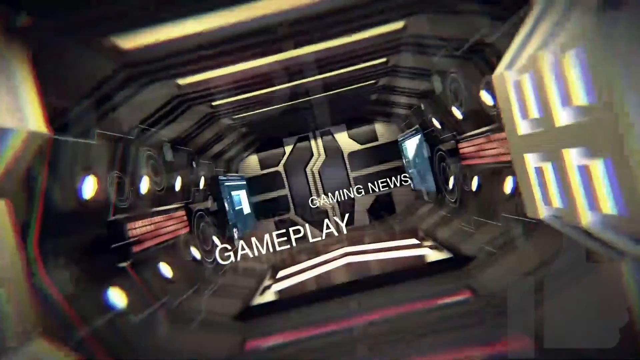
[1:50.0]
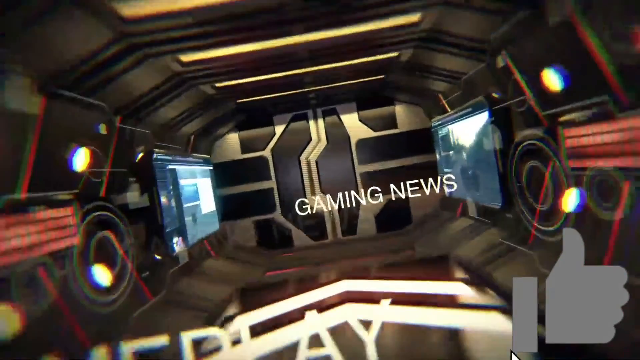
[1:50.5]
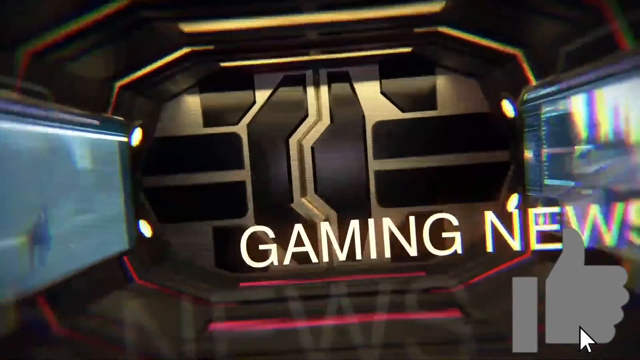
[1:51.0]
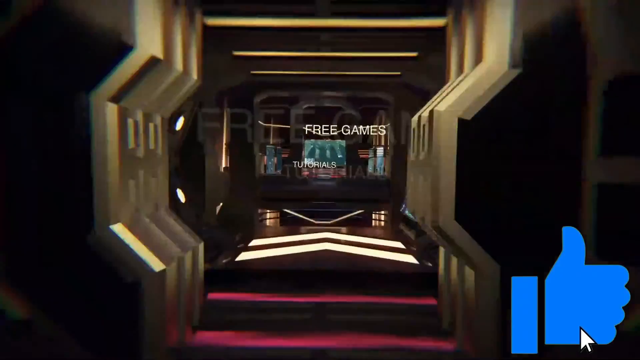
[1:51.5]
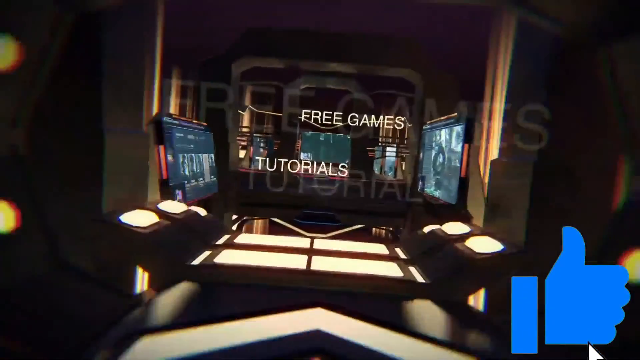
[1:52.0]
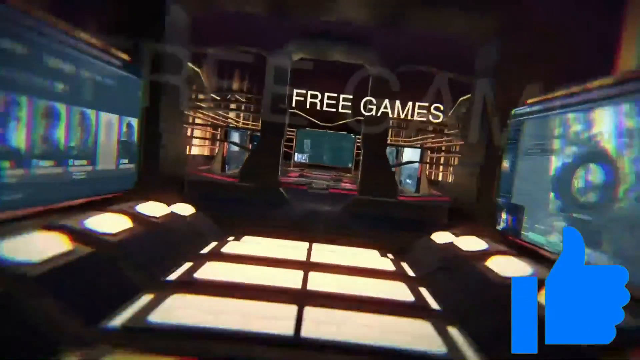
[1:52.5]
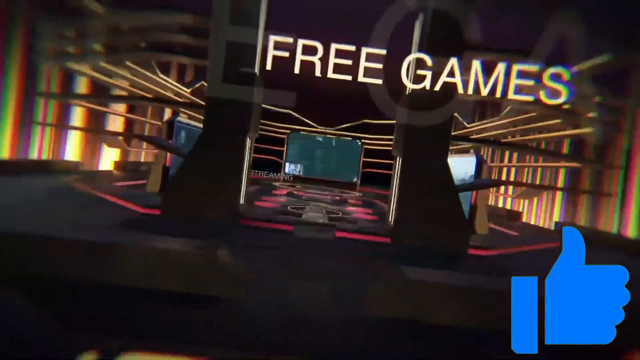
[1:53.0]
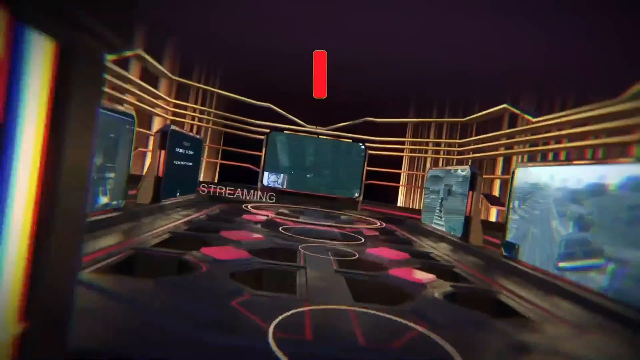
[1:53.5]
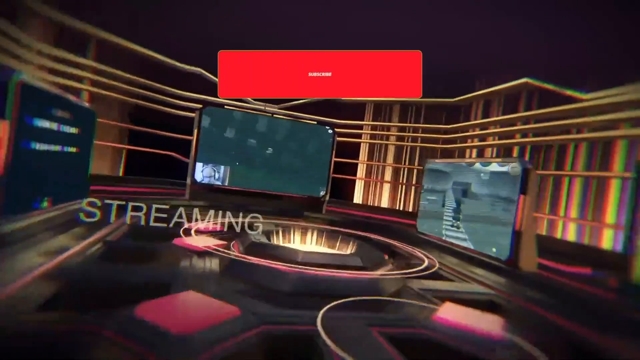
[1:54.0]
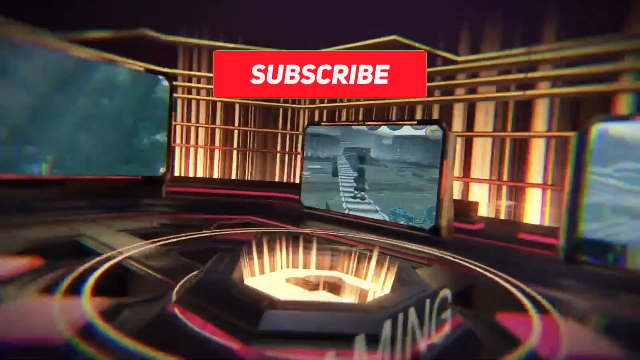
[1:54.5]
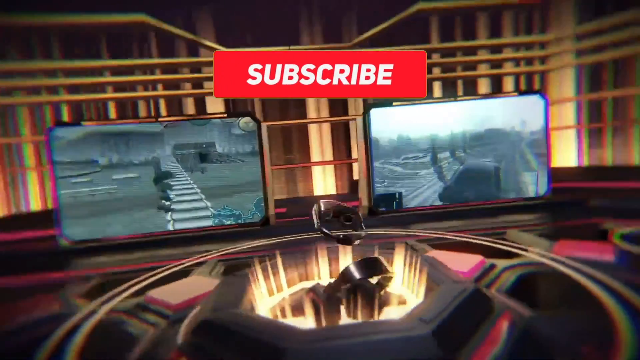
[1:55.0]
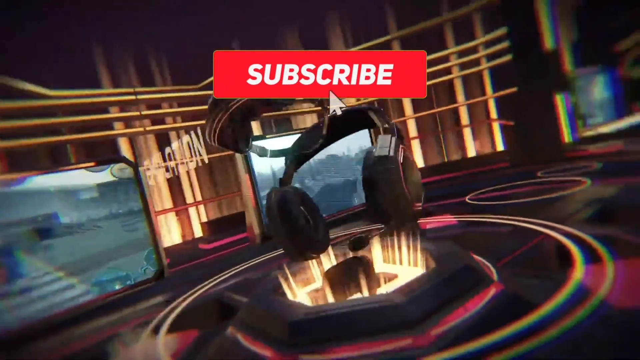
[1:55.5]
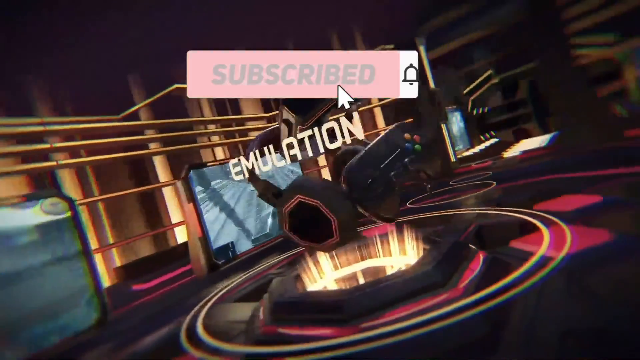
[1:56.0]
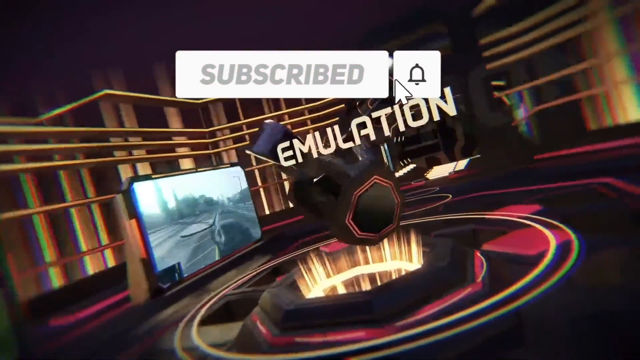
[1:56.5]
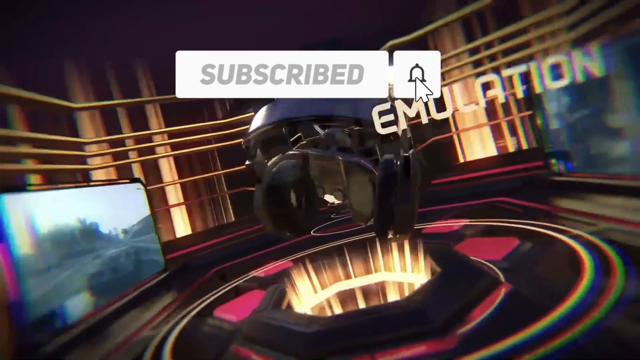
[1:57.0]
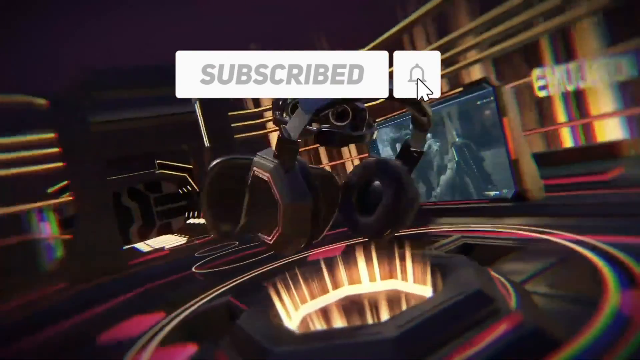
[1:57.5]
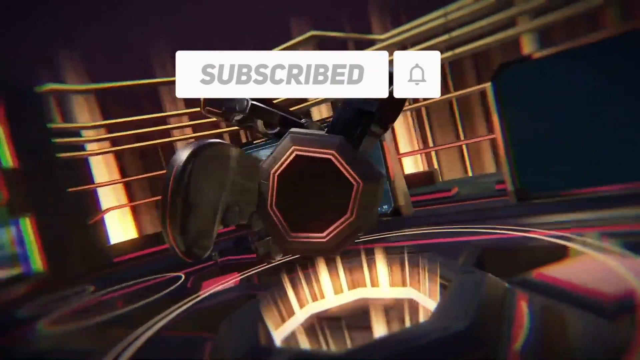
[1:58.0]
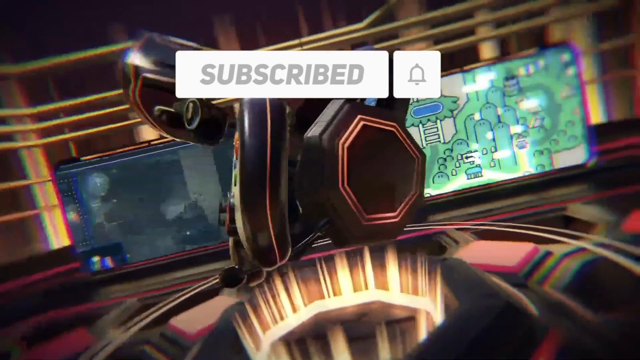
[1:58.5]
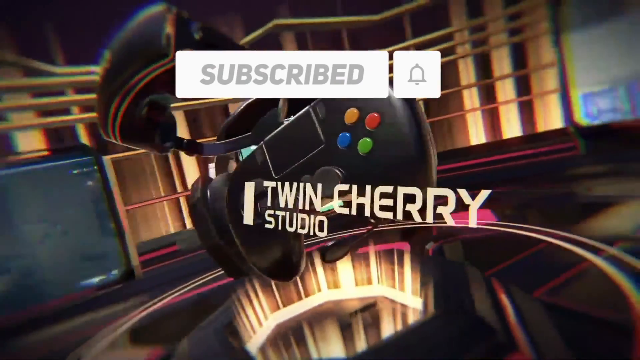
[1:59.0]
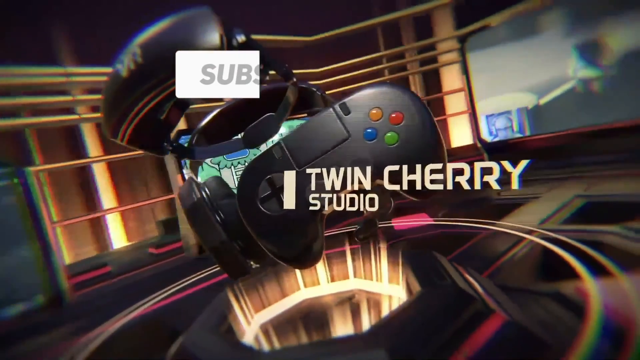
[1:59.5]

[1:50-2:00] An introduction sequence begins with the text "gaming news gameplay", then moves through an area kind of like a science-film outer-space rocket area. Doors open and the view moves forward as "free games streaming" appears, followed by "subscribe" and "emulation". Headphones come out of a circle area that lights up in the middle while the room spins in the background. All of it is digitally produced, and "twin cherry studio" appears. The whole scene looks scientific.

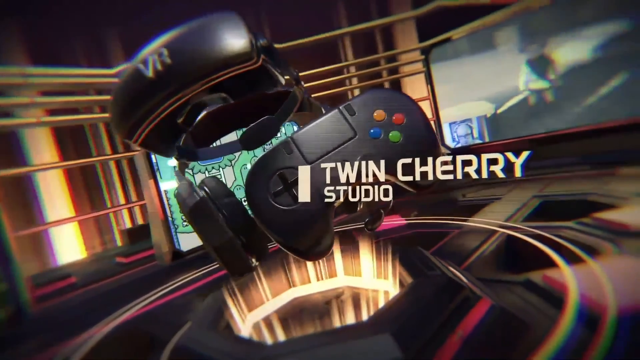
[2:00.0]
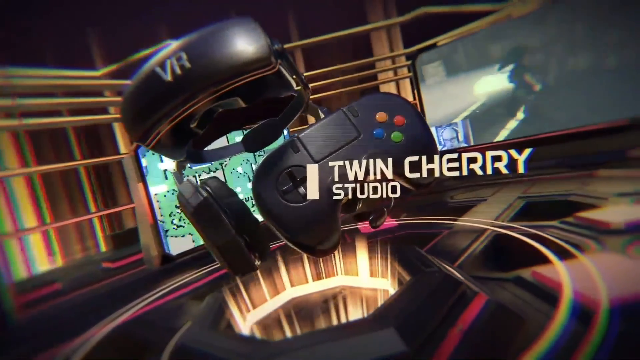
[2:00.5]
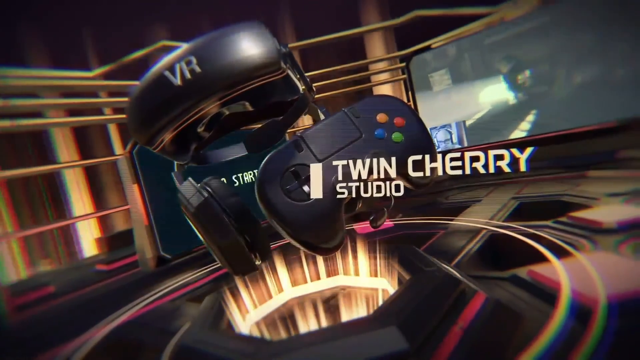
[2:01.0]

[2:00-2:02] "Twin Cherry Studio" is on the screen, with an Xbox controller up in the middle. Its buttons are yellow at the top, red to the right, blue to the left and green below. A VR headset is near a pair of headphones. The area spins slightly in the background, and there are lit-up areas right in the middle from which this kind of popped out of an opening at ground level. Two screens are in the background, one in the upper right-hand corner and one behind the VR headset, but their contents cannot be seen because they are blocked and a little blurred. Kind of yellowish lines run through the background, kind of like steel pipes.